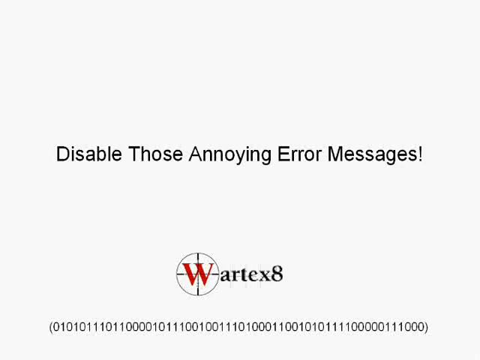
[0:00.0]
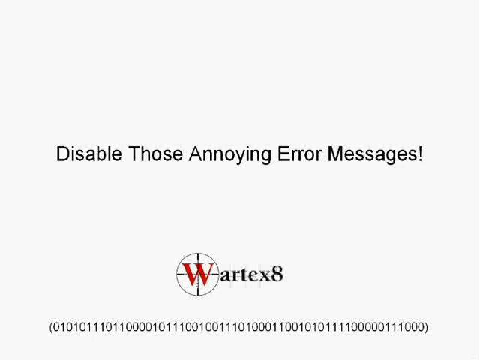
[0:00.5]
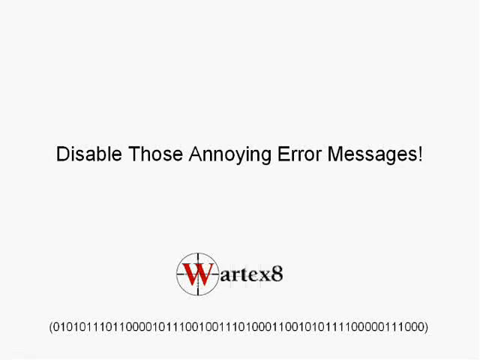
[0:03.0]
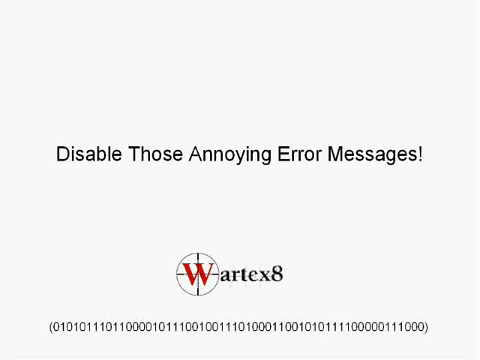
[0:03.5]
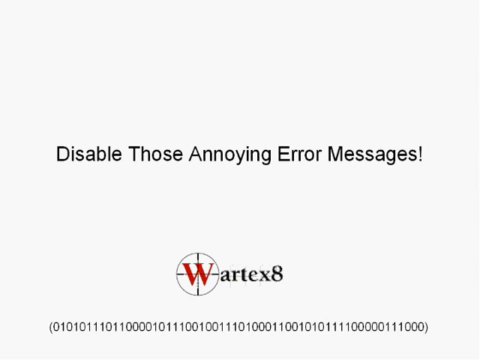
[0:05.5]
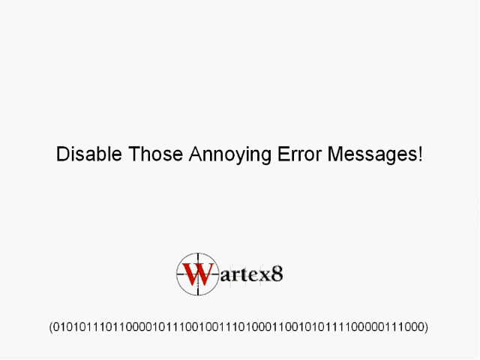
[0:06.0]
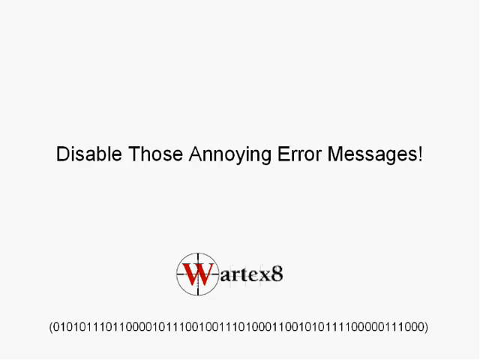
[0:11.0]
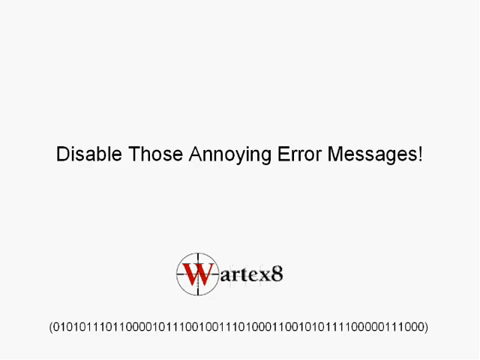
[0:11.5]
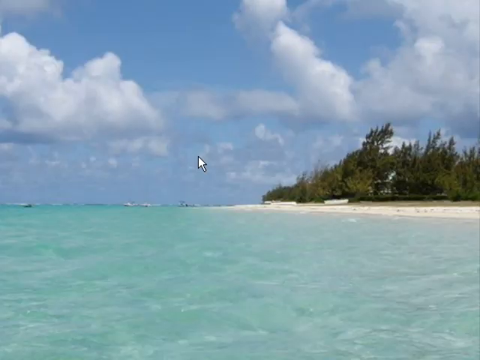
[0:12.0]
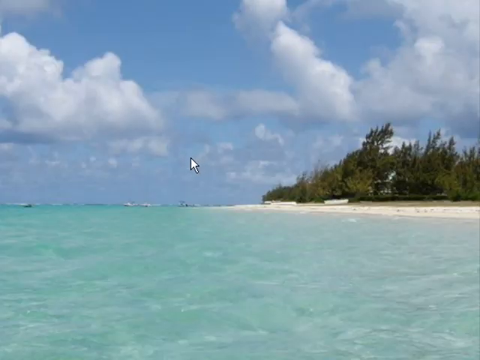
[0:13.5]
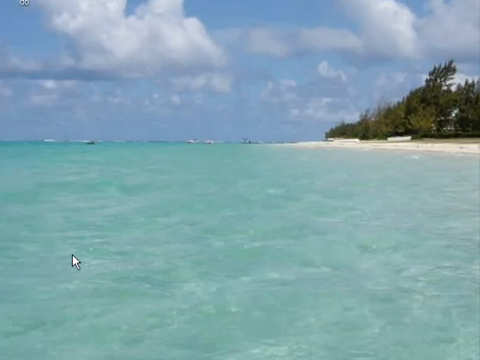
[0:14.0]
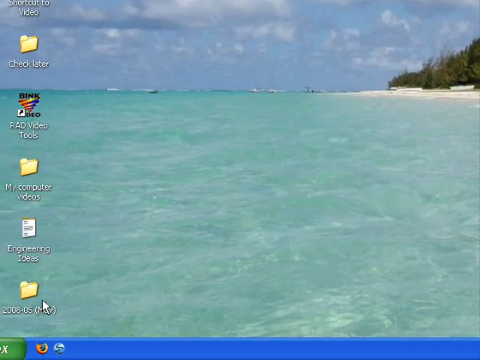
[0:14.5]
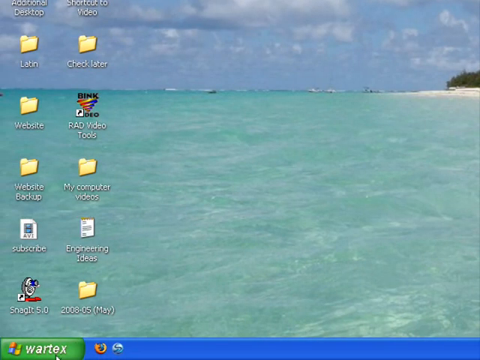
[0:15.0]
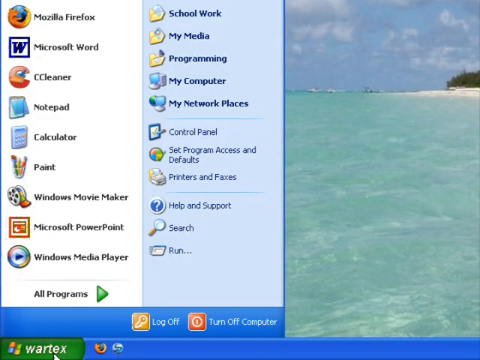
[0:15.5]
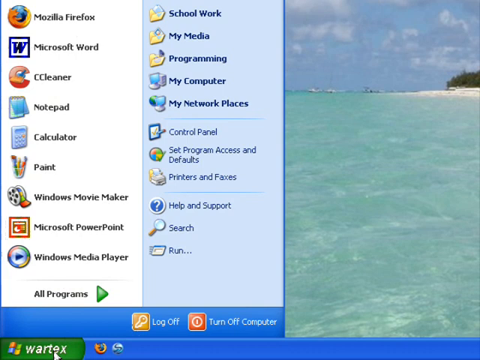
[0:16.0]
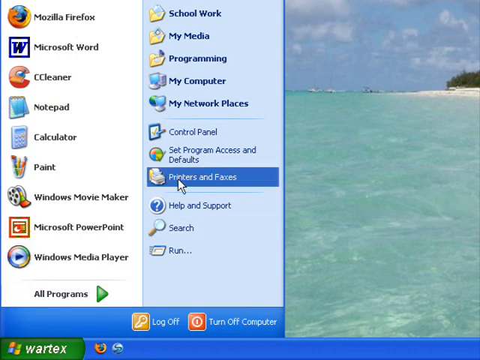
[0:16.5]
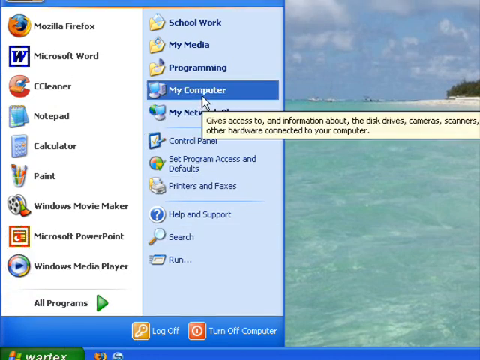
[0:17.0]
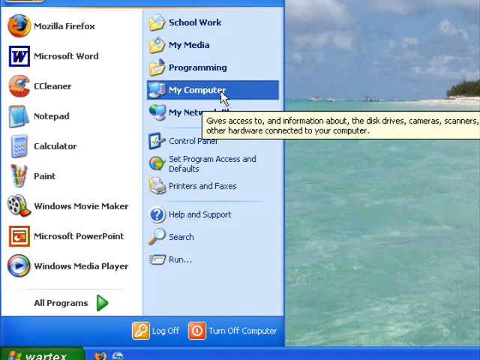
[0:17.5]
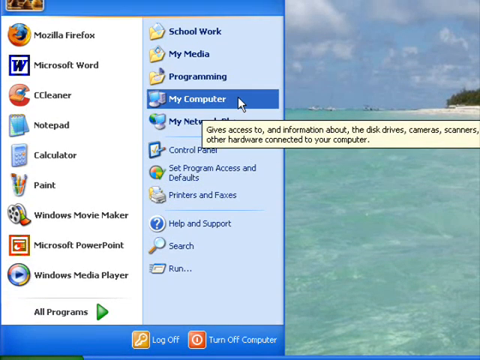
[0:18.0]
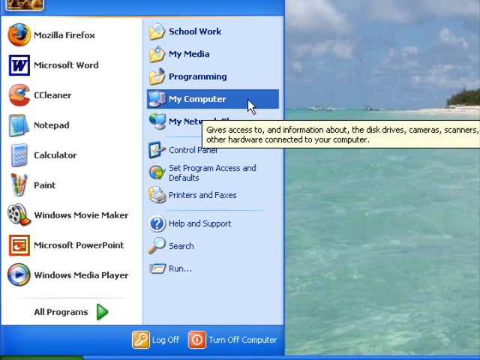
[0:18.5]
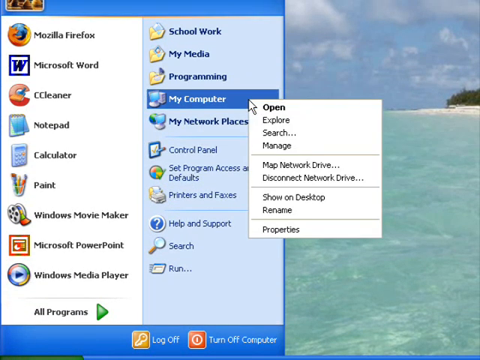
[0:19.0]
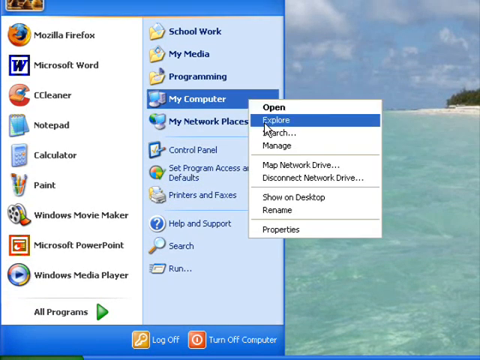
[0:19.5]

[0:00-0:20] The video opens on an all-white web page that reads "disable those annoying error messages!" along with the name Vortex 8, whose W is drawn as a crosshair symbol. This symbol is also labeled in red, and a serial number of zeros and ones runs along the bottom of the page. The main subject is probably a single user. He closes the page and goes to his desktop, where a number of apps are available, including CC Cleaner, Microsoft Word, Mozilla Firefox, Paint and Windows Movie Maker, which is already selected. Only two things have been shown so far, the web page and the desktop. He then opens the properties of his computer, moving into the settings and the system properties. The user seems to be trying to install some kind of software.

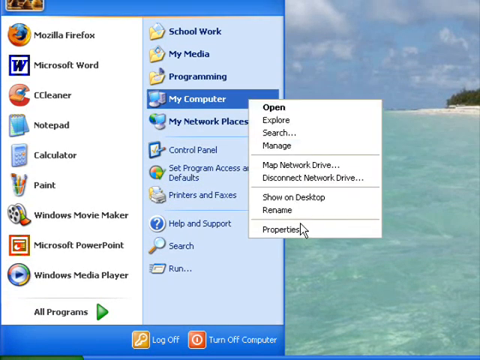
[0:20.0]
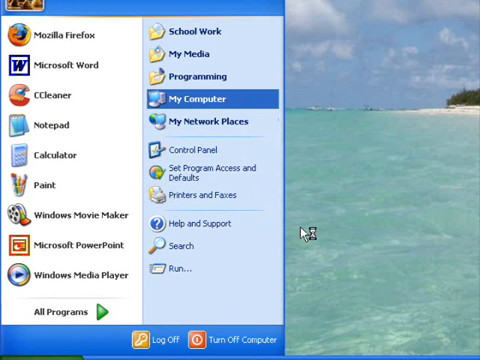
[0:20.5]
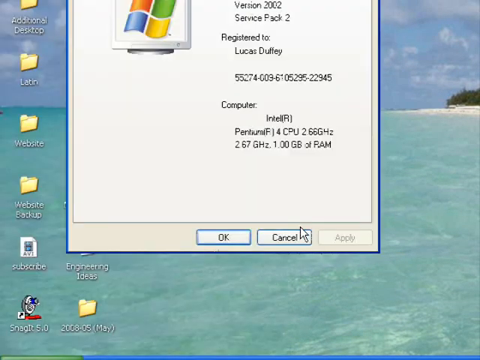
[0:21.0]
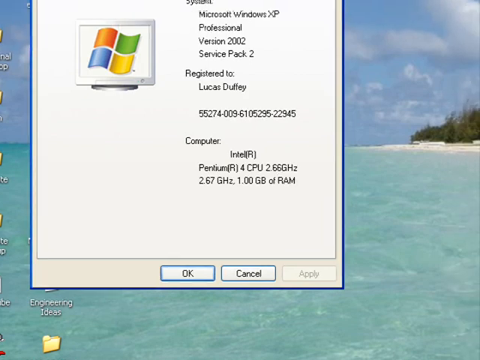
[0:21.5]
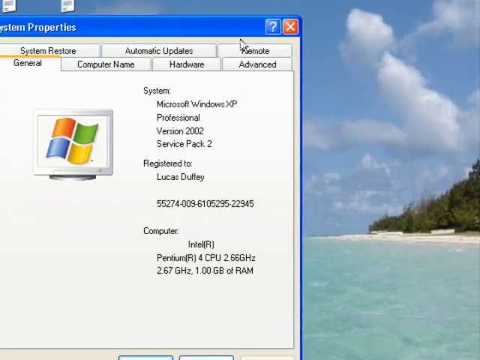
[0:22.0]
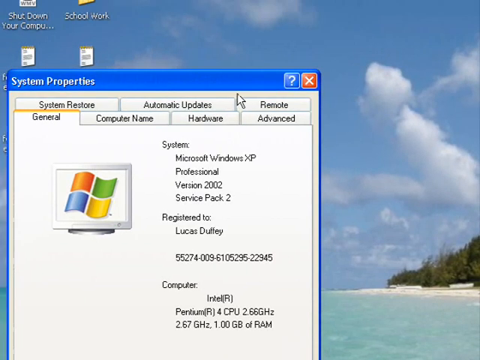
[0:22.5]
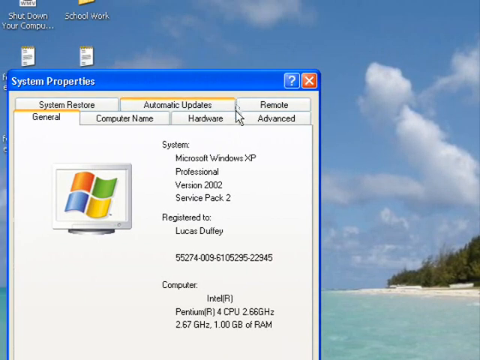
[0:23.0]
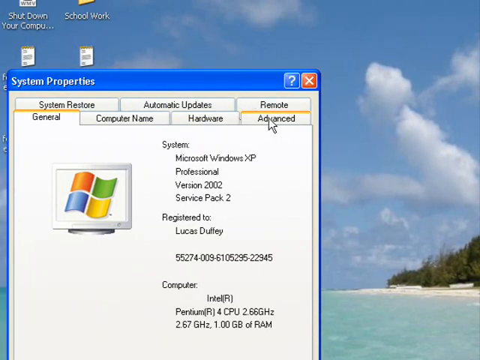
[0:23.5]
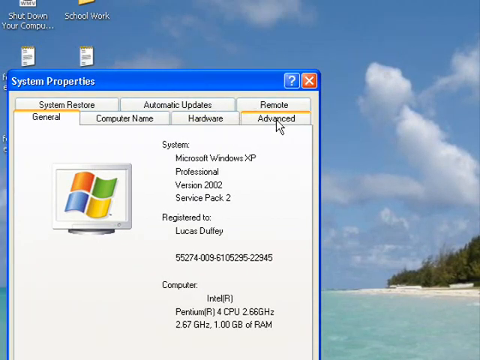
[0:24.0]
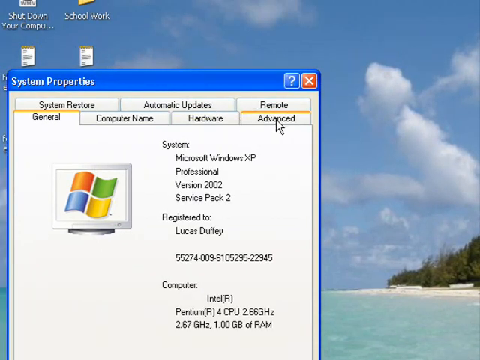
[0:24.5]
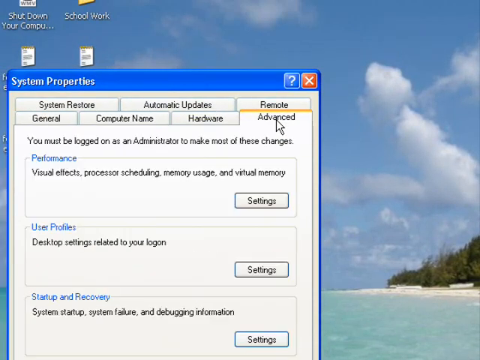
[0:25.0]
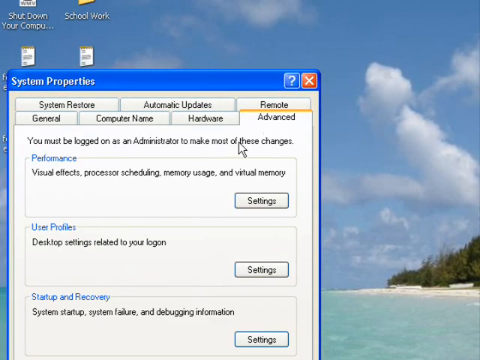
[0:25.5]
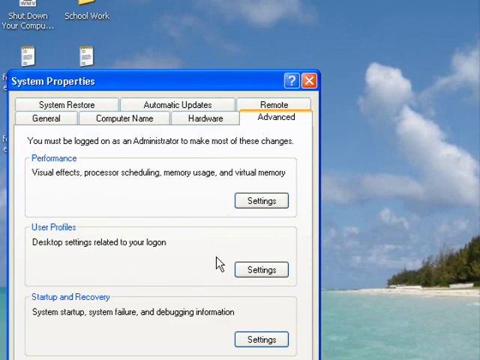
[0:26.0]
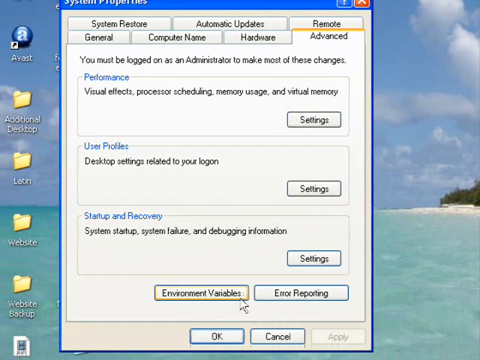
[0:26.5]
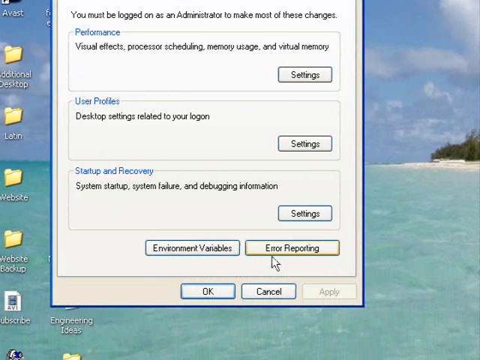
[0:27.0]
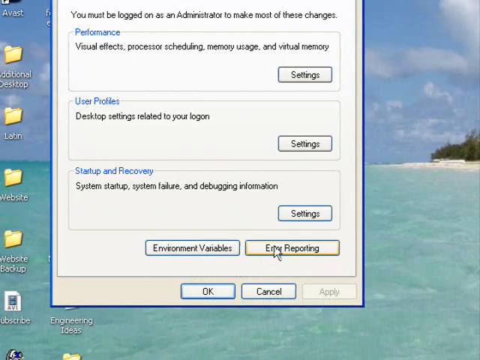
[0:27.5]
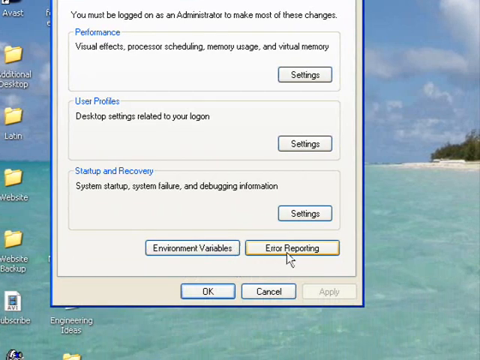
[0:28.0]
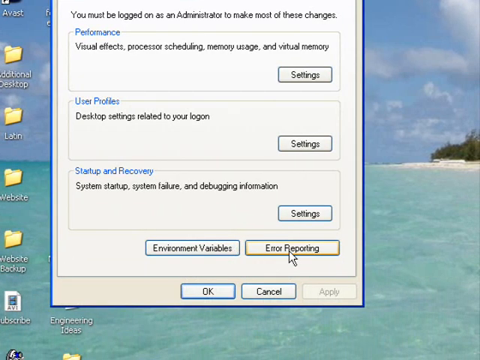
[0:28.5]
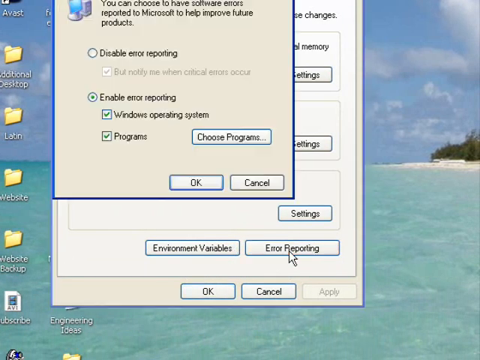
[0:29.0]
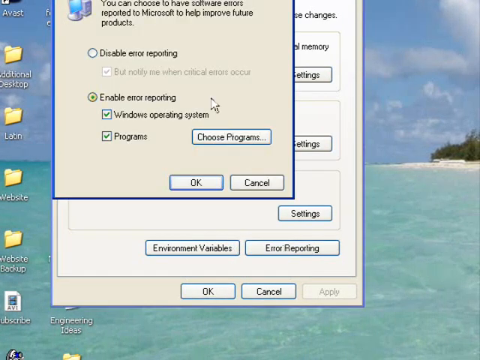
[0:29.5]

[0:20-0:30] In the system properties, the user goes to the Advanced section and looks at the error reporting subsection.